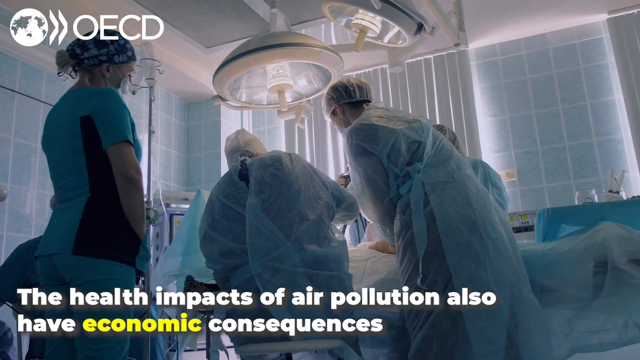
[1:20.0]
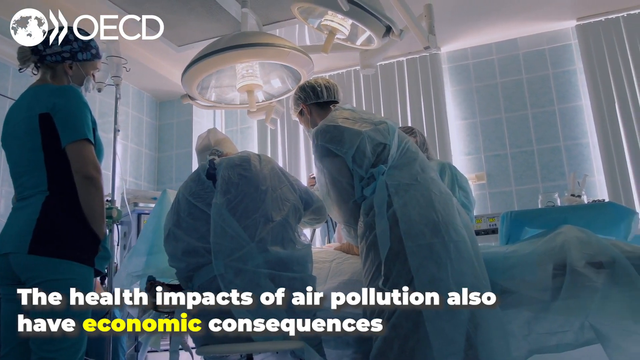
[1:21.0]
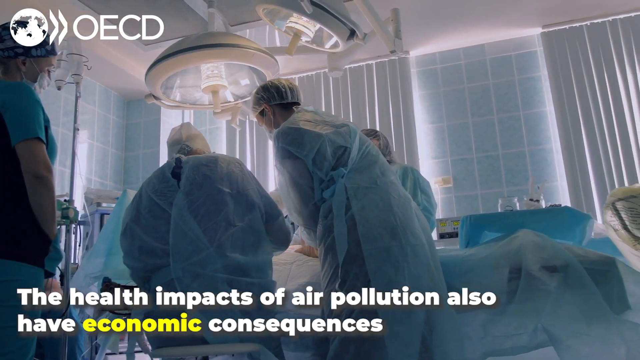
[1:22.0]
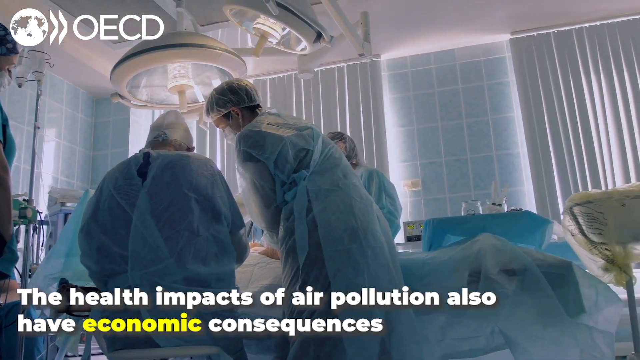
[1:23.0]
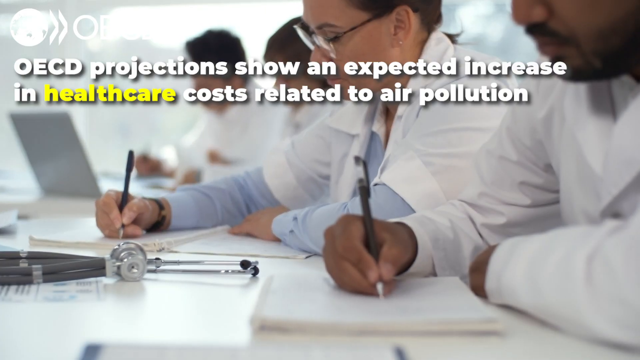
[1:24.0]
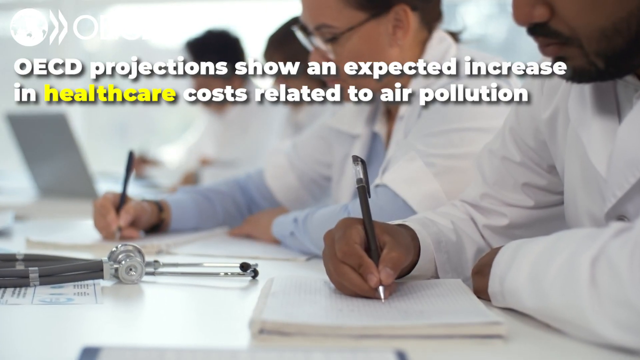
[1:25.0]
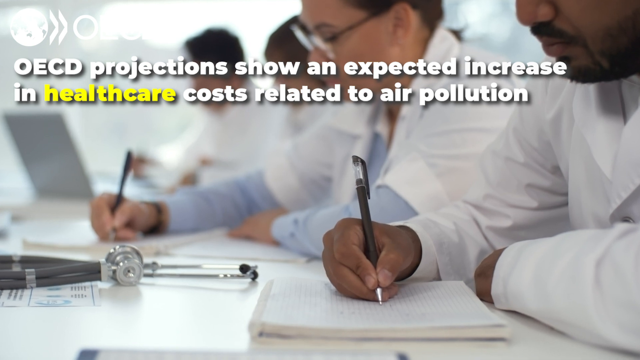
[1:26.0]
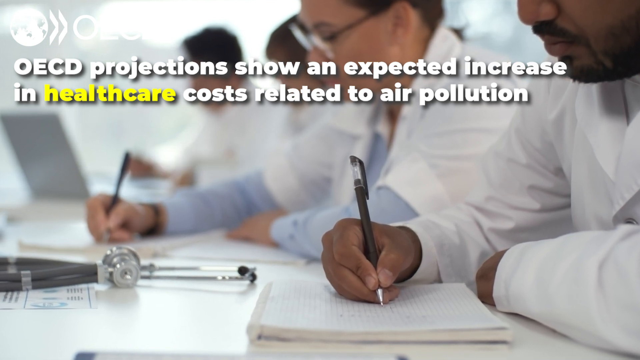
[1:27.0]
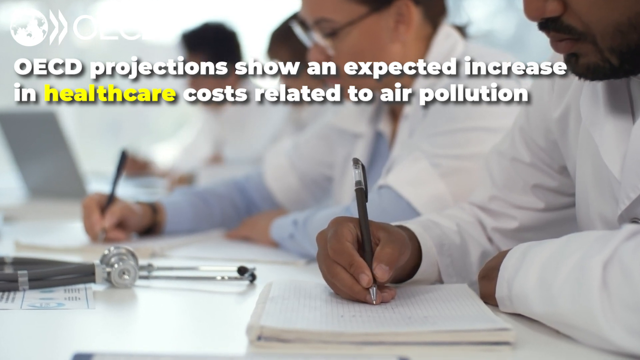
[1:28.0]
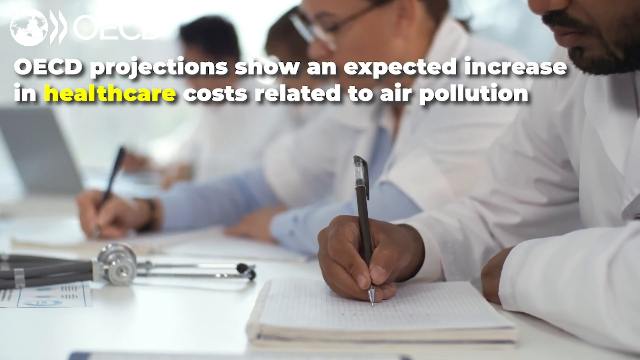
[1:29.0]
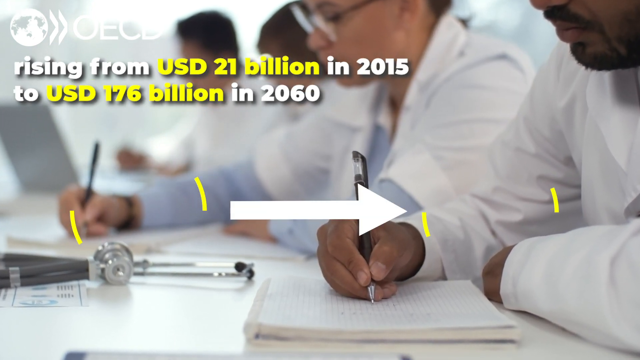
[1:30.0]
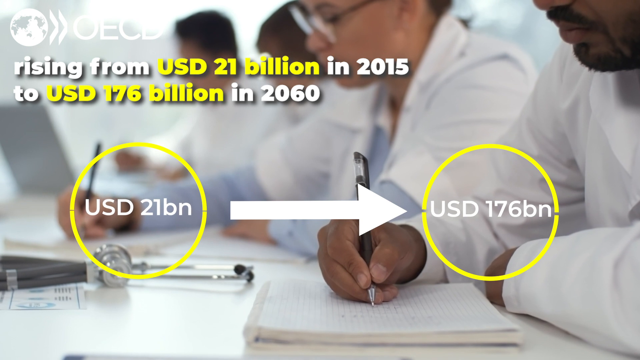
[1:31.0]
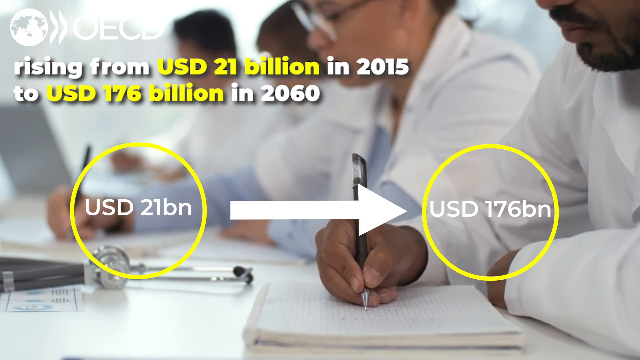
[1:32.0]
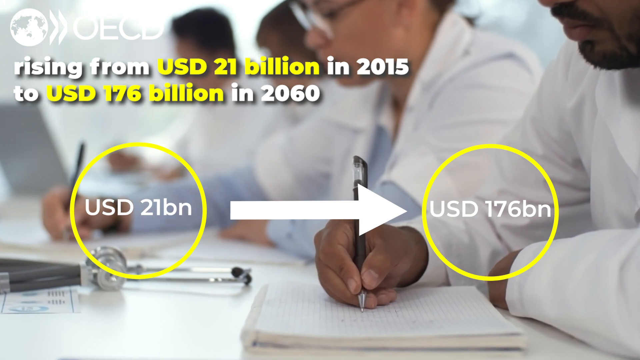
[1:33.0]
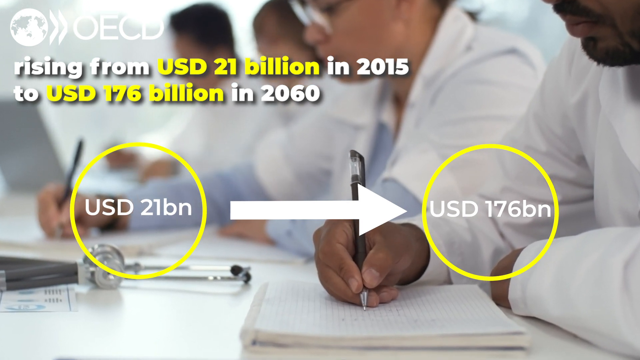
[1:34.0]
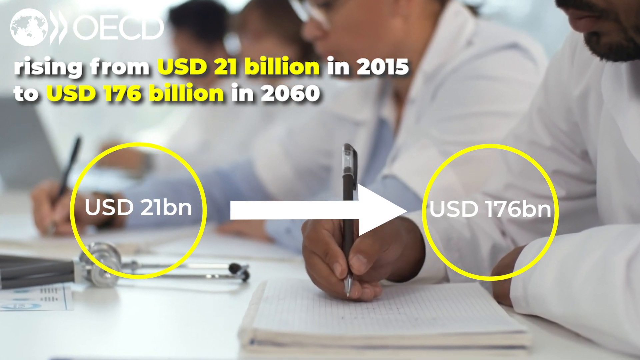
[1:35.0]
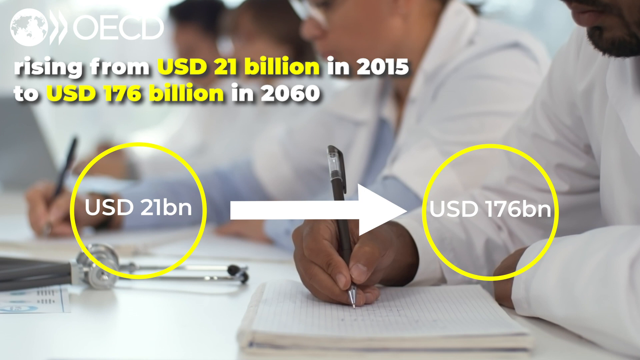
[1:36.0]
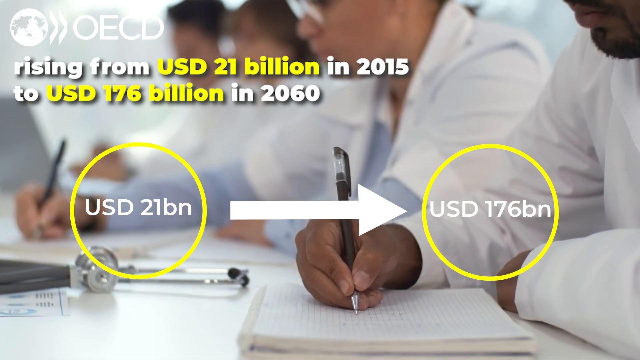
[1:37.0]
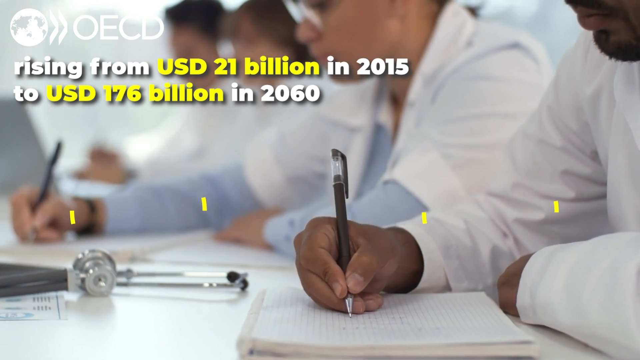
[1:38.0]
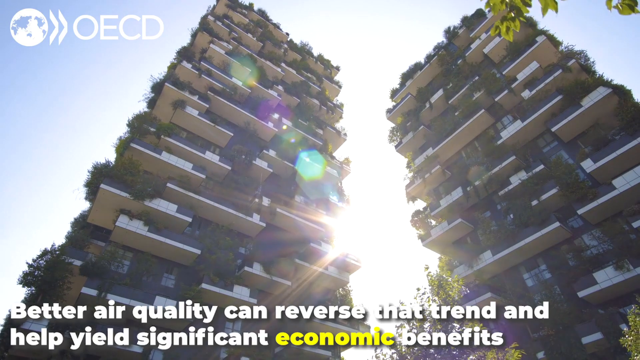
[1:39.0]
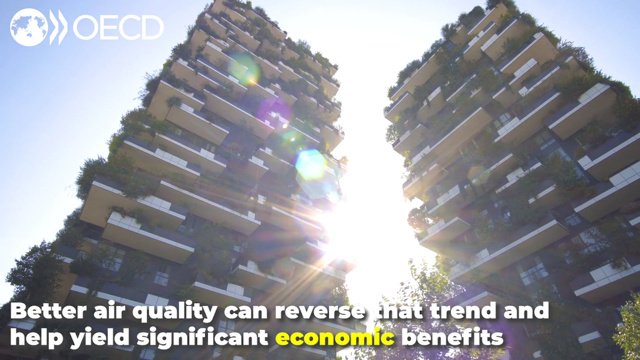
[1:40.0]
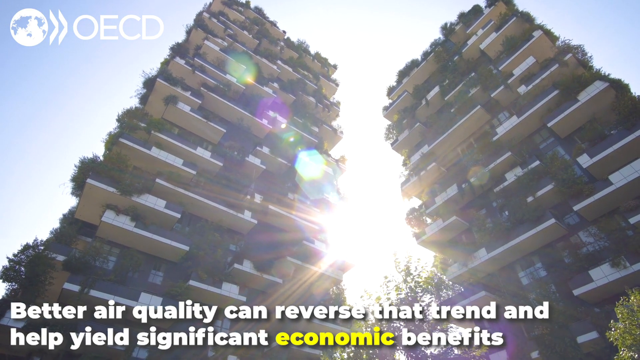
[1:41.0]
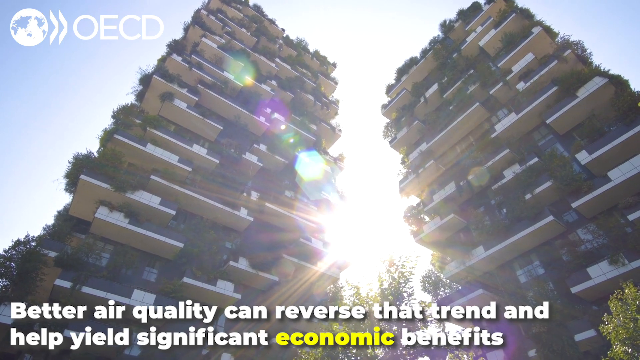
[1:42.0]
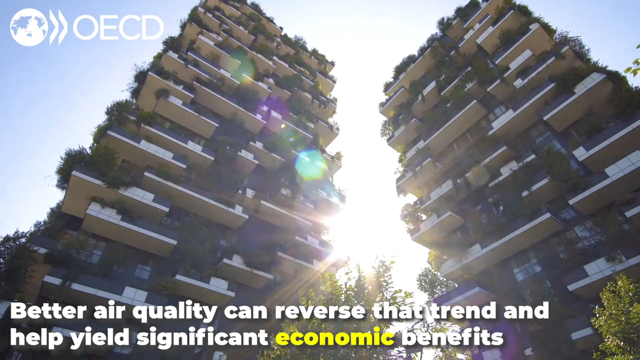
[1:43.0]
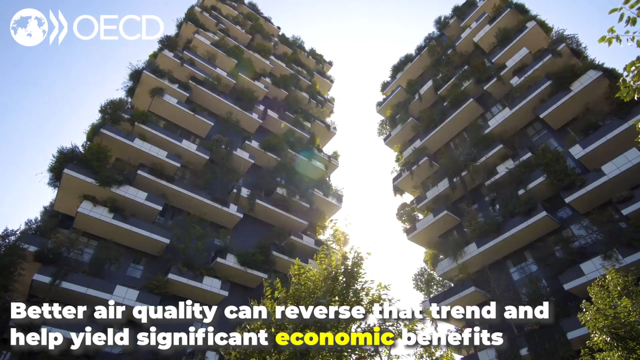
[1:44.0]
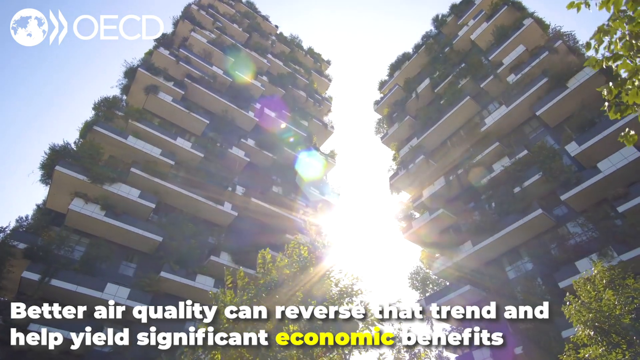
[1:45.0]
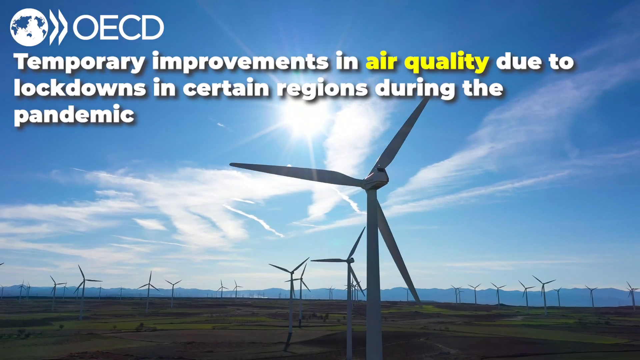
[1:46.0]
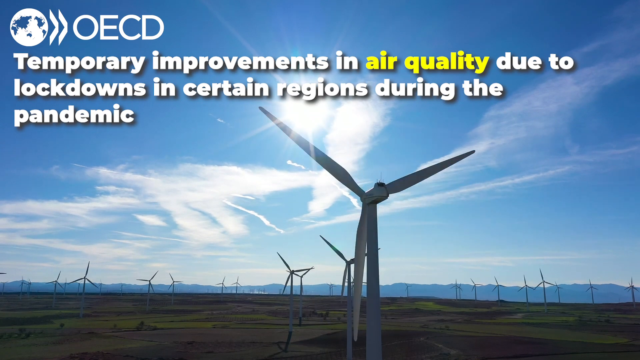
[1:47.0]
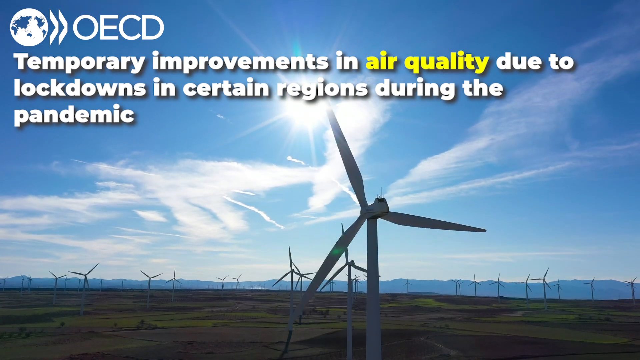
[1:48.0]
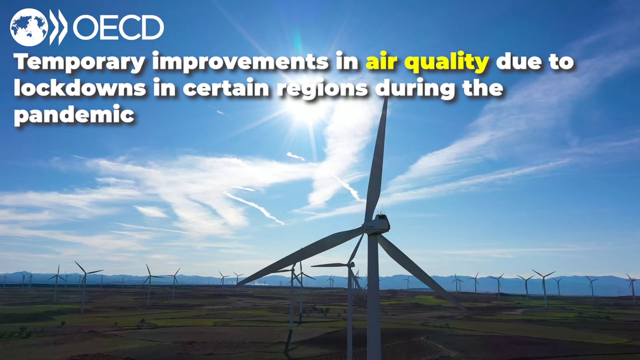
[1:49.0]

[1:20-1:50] A close-up shows people in white doctor's coats. The one closest to the camera, a man with a mustache and a beard, writes on some paper with a black pen in his right hand. The person to his right wears glasses and a light blue long-sleeve shirt under his white jacket; he too writes with a black pen in his right hand on paper in front of him, his left arm bent and resting on the table. Two other people are blurred in the background. It is unclear whether they are actually writing anything, as they do not seem to follow any lines on the paper and just move the pens backwards and forwards. Text reads "OECD projections show an expected increase in healthcare costs related to air pollution". More text then appears: "rising from US dollars 21 billion in 2015 to US dollars 176 billion in 2060". A graphic then appears in the middle of the screen: on the left, "USD 21 BN" with a yellow circle around it; to its right, a large white arrow pointing to the right; and on the far right, "USD 176 BN", also with a yellow circle around it. The next shot looks up from the bottom of two tall towers, possibly residential flats or apartments, with a lot of greenery and foliage grown all over them and the very bright sun shining through the gap between them. As the camera moves, sun flares reflect onto the camera. Then a wind farm appears, with many windmills on a flat, grassy area under a very blue sky.